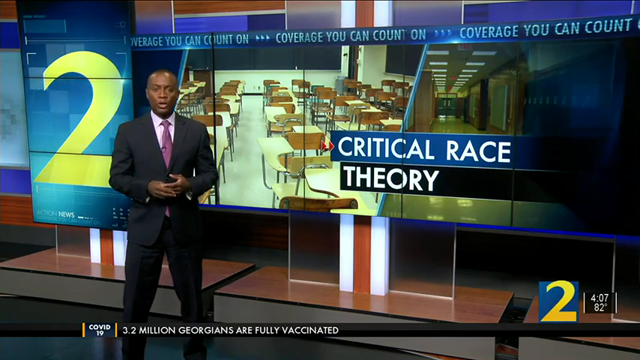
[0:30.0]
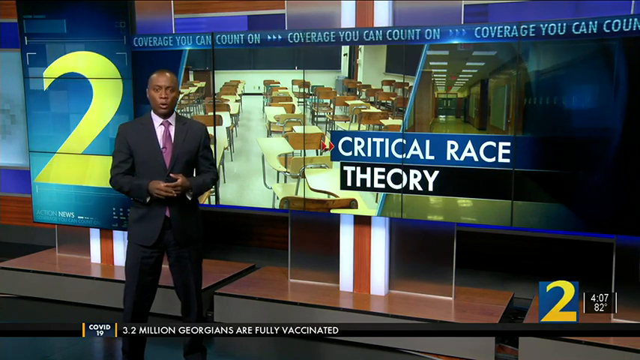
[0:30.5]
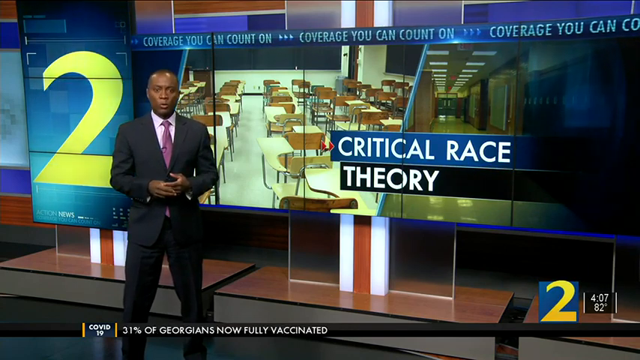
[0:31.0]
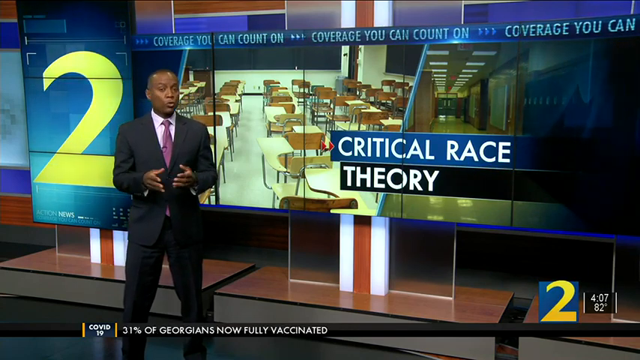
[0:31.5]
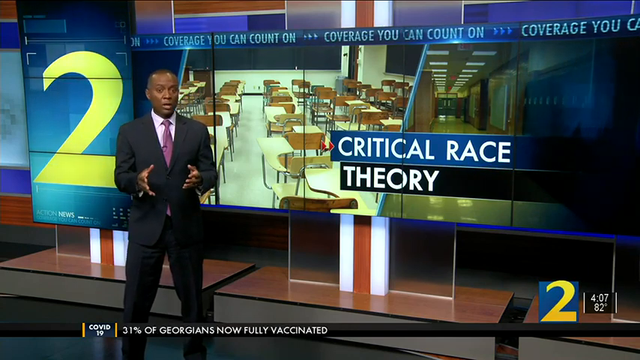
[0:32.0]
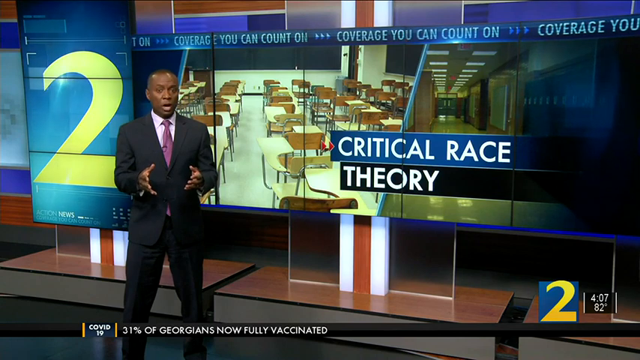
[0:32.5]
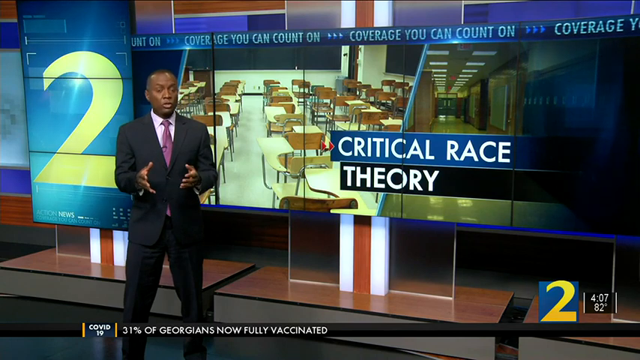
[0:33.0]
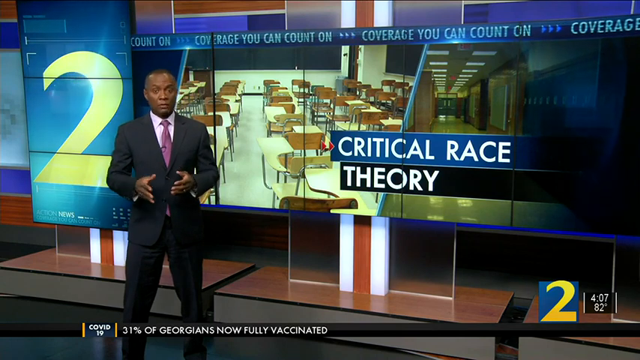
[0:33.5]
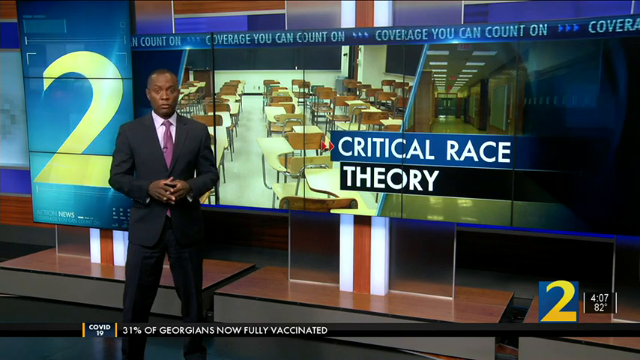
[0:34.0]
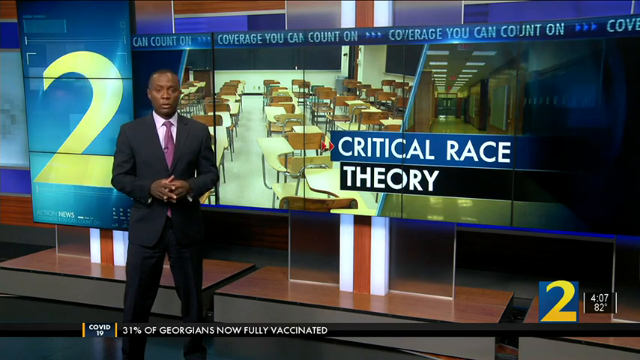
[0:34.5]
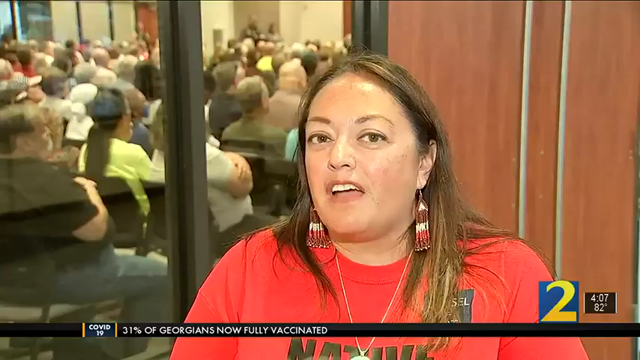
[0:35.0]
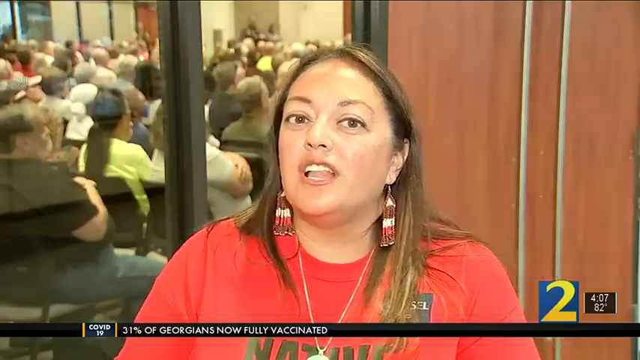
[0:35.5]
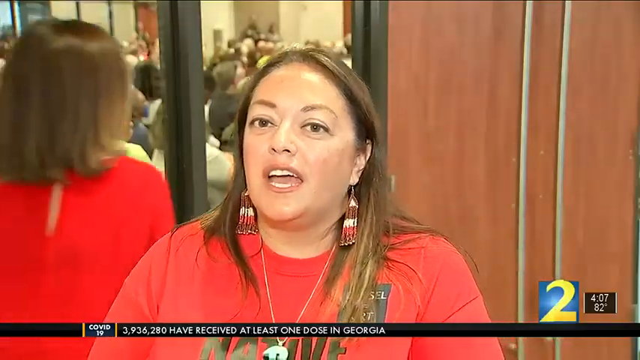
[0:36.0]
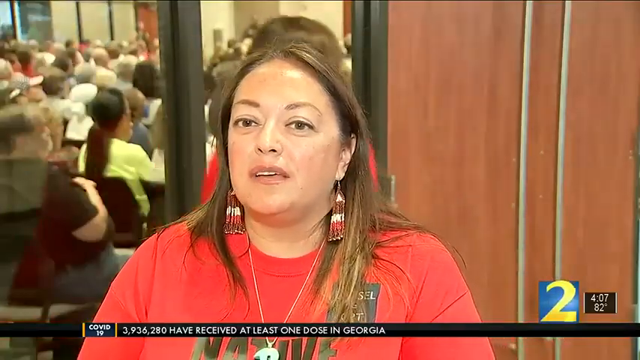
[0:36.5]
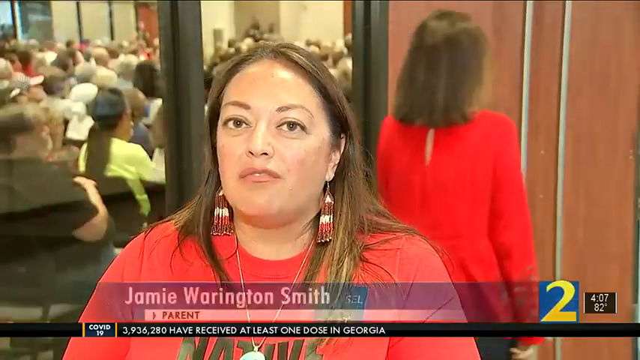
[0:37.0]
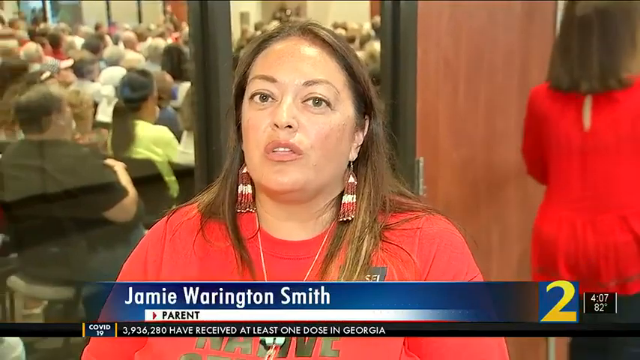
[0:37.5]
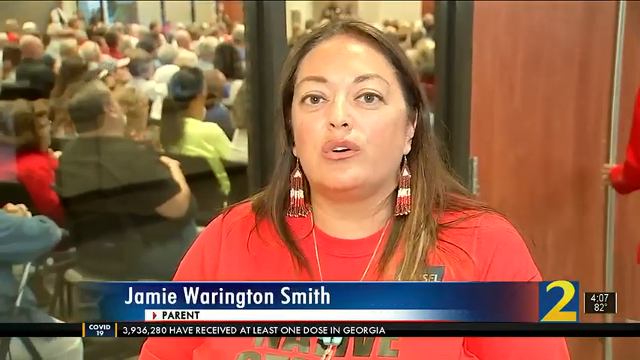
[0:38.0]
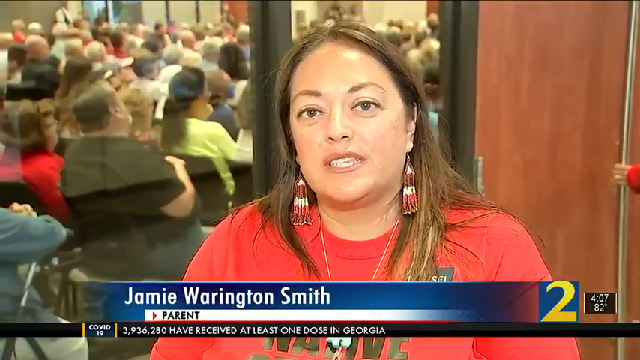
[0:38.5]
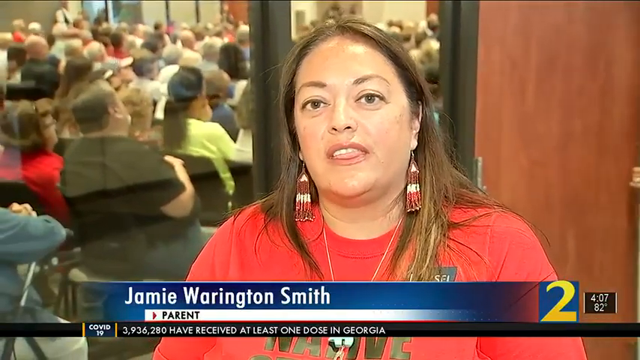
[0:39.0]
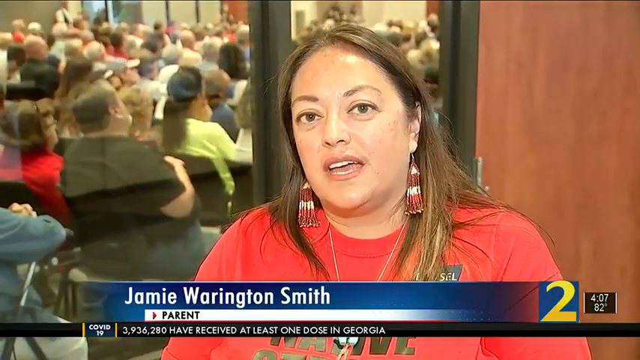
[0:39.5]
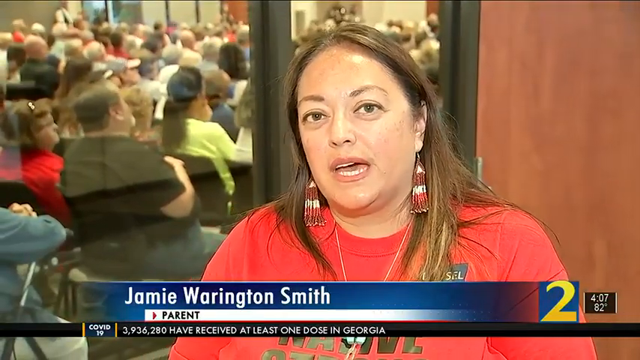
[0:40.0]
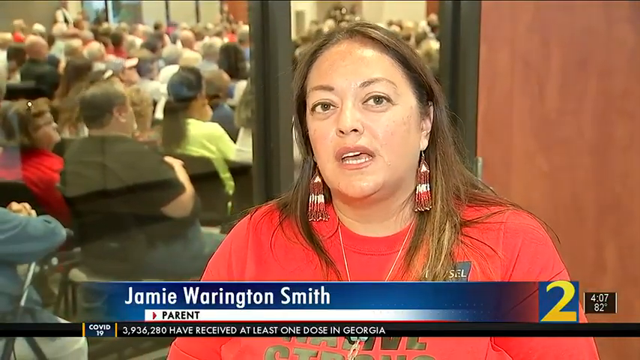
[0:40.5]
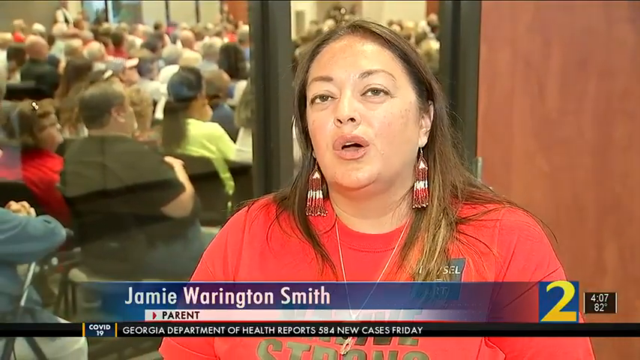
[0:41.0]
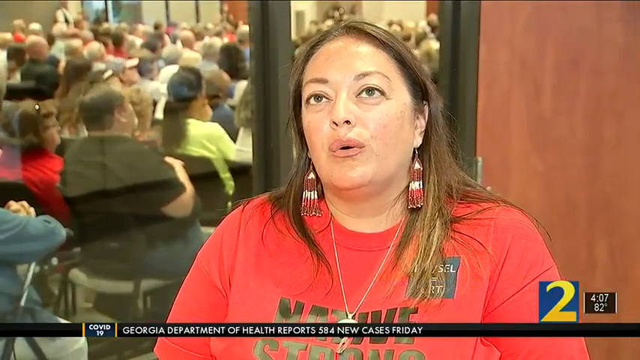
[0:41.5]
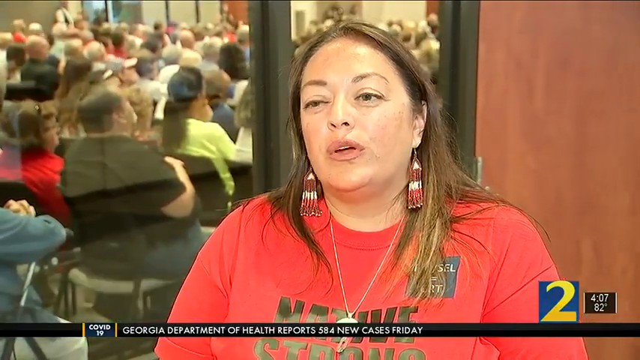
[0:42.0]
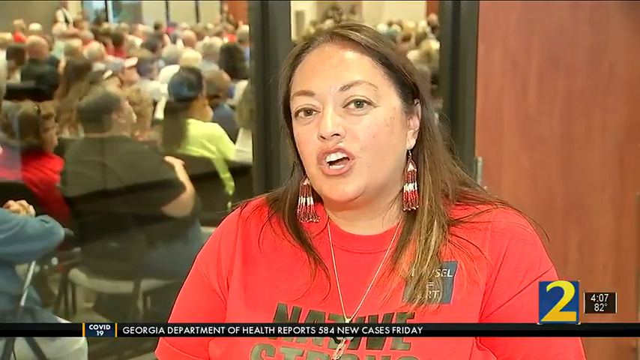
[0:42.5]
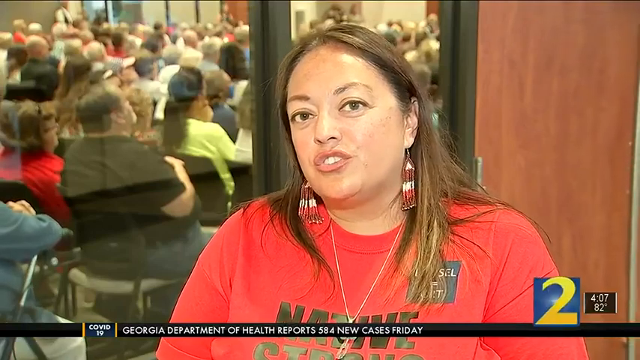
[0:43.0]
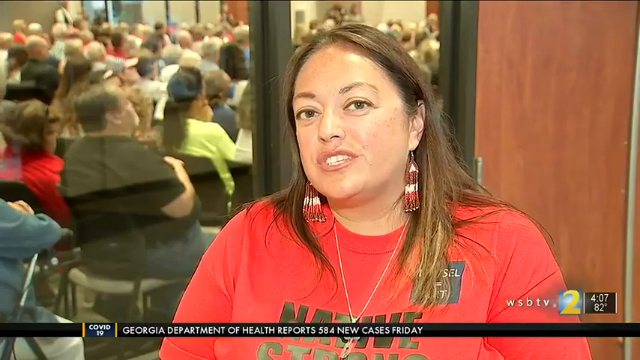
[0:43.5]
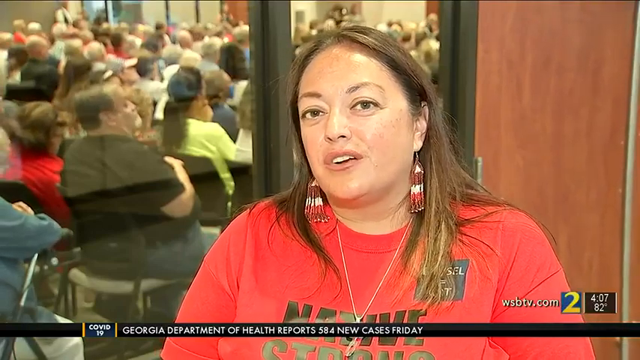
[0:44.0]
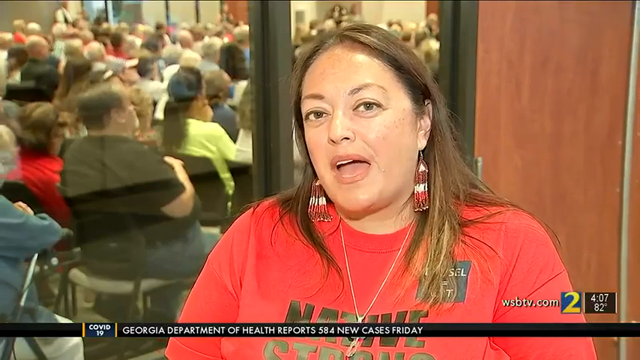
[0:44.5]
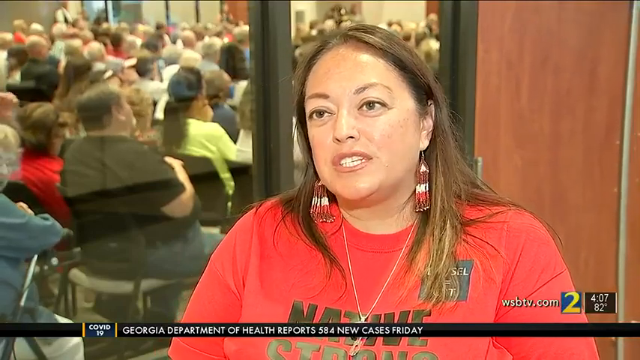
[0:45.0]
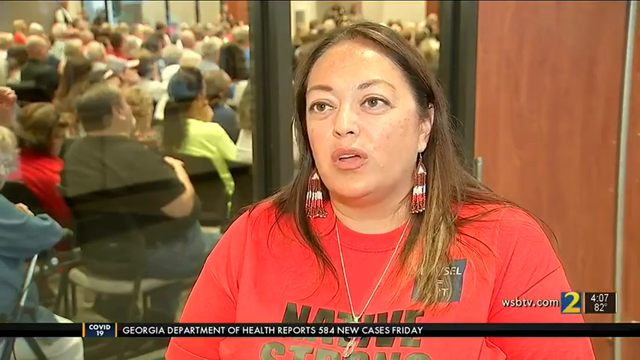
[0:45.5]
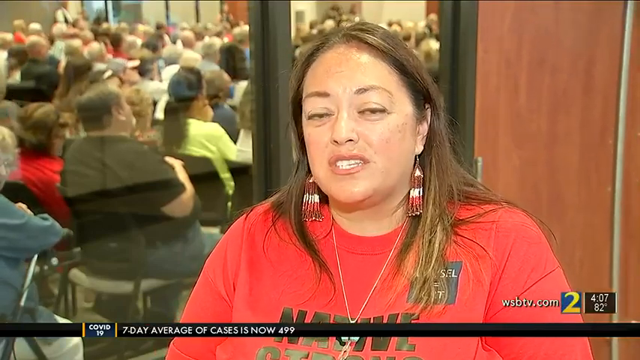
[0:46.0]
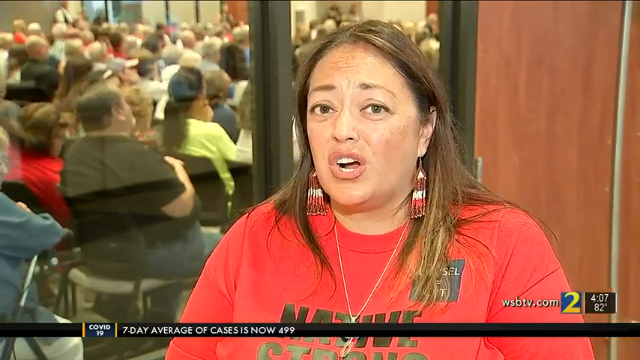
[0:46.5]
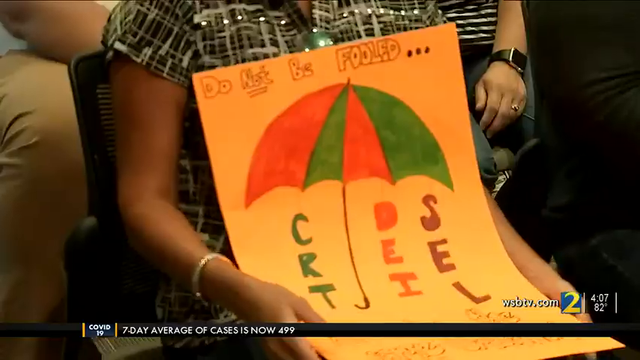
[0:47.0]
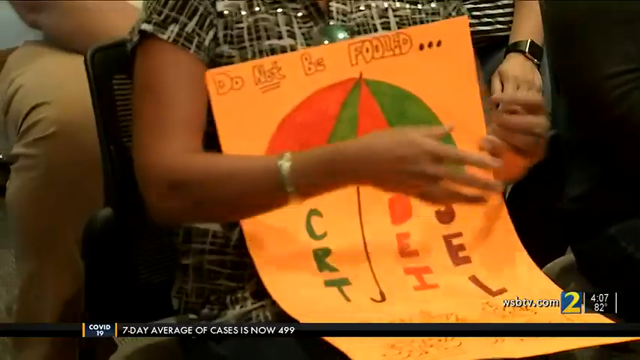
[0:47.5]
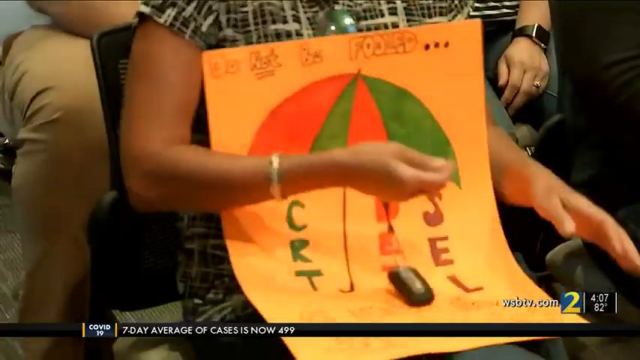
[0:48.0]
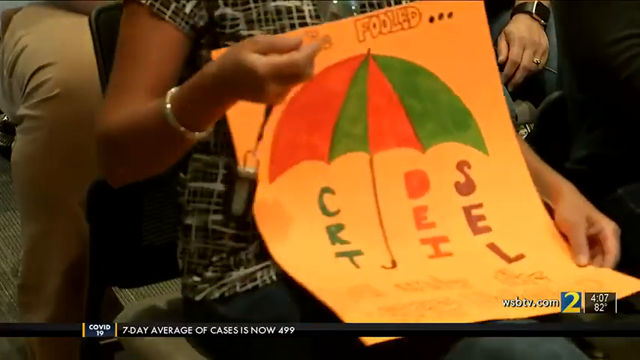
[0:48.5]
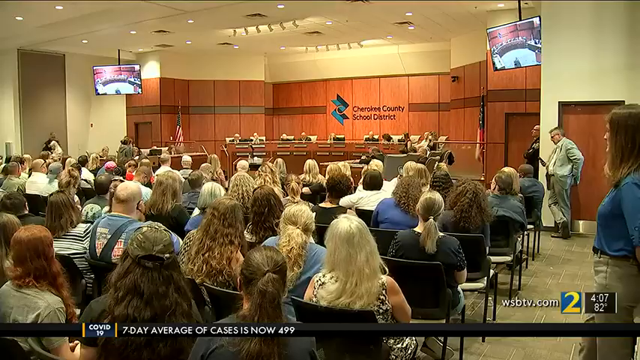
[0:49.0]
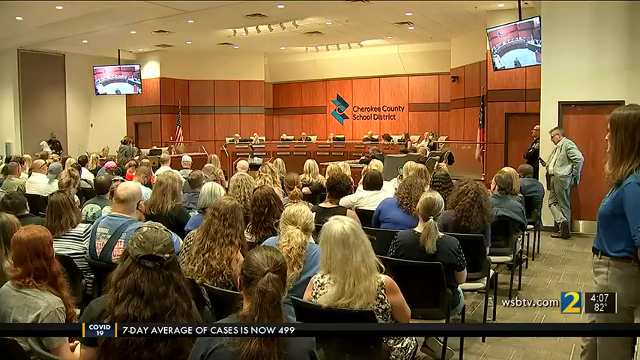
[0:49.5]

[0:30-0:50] A news anchor stands in front of a screen that shows "critical race theory" in the background. He is a bald Black man wearing a black suit, a light purple shirt and a purple tie. He talks and moves his hands while discussing the story behind him. The scene then changes to someone outside a school giving an interview: a woman named Jamie Warren Smith, who looks like a parent, apparently outside a PTA meeting, giving her opinion, seemingly on the school teaching critical race theory. Next, a crowd of people with signs appears at what looks like a school board or PTA meeting; many parents and community members have shown up, and the auditorium is completely full of people.